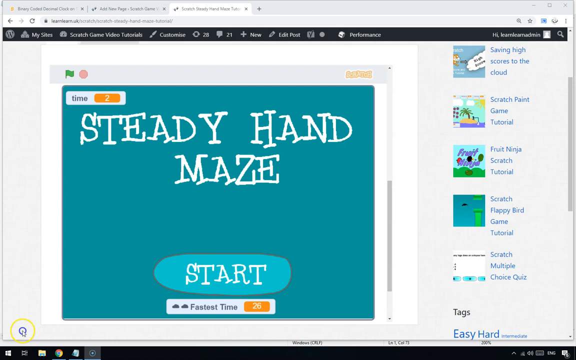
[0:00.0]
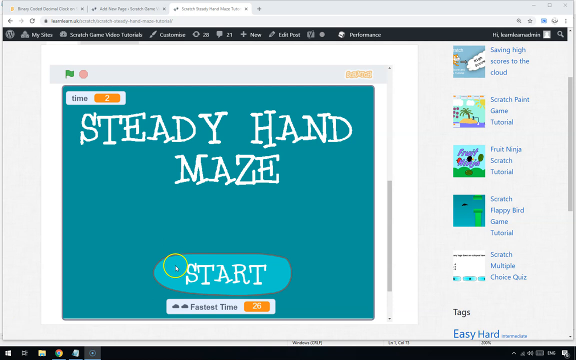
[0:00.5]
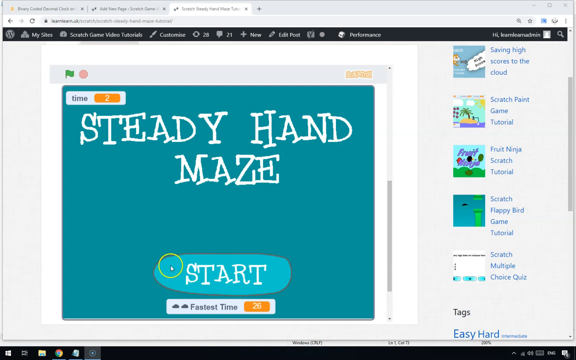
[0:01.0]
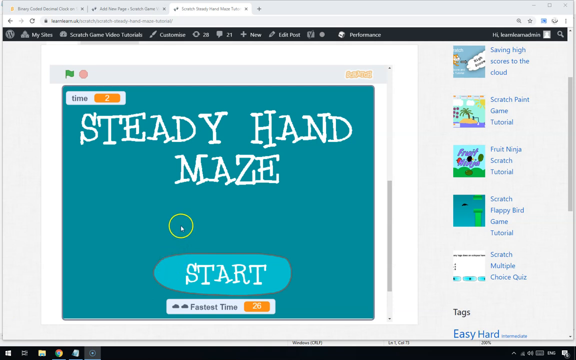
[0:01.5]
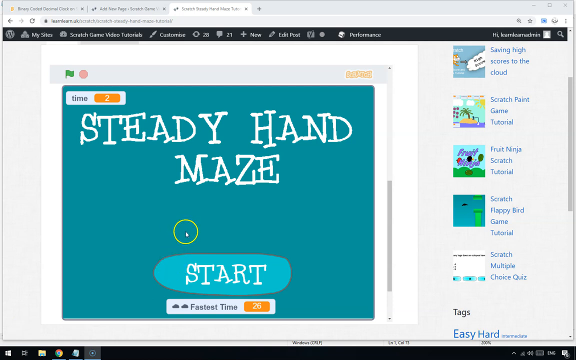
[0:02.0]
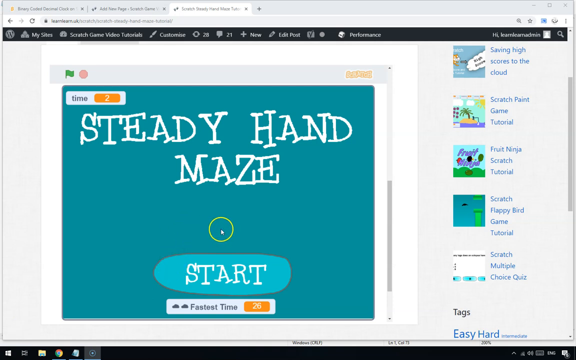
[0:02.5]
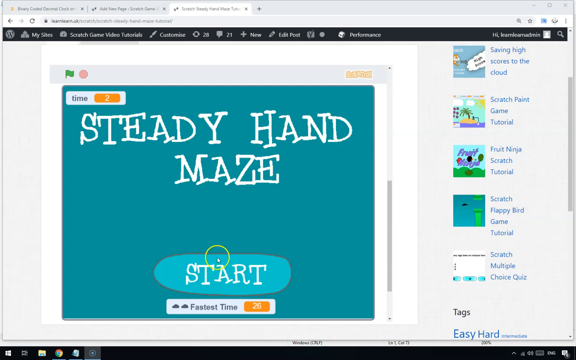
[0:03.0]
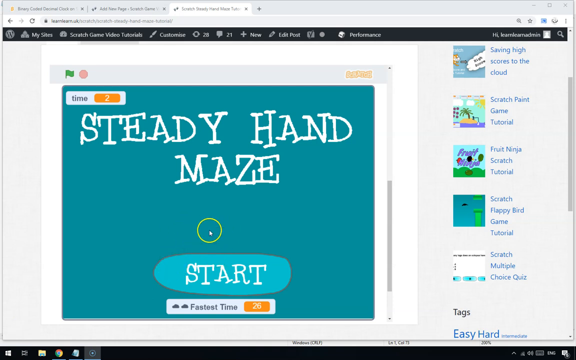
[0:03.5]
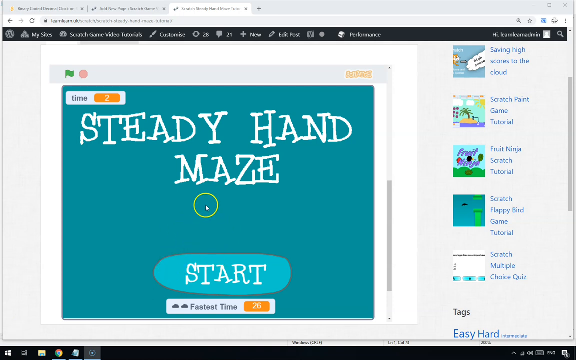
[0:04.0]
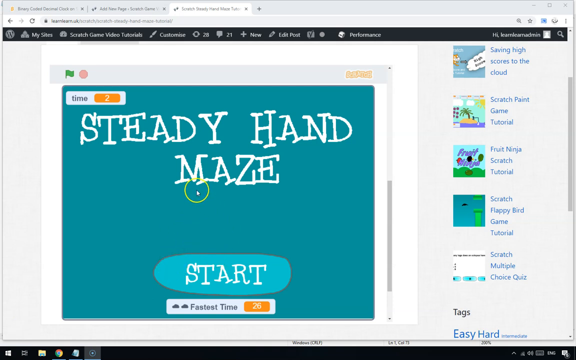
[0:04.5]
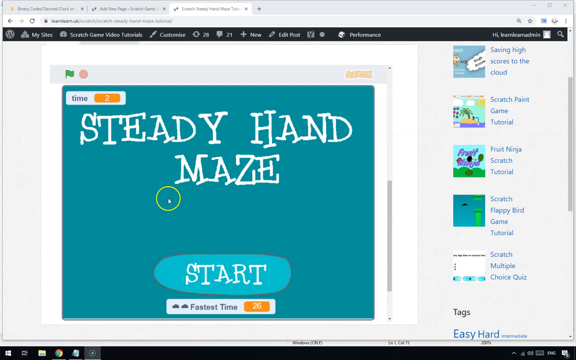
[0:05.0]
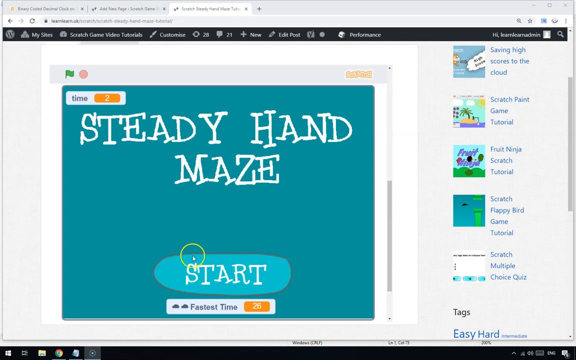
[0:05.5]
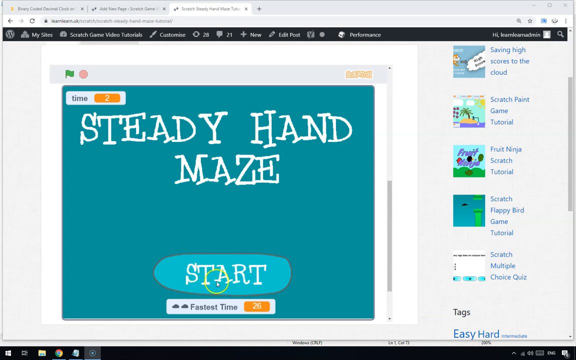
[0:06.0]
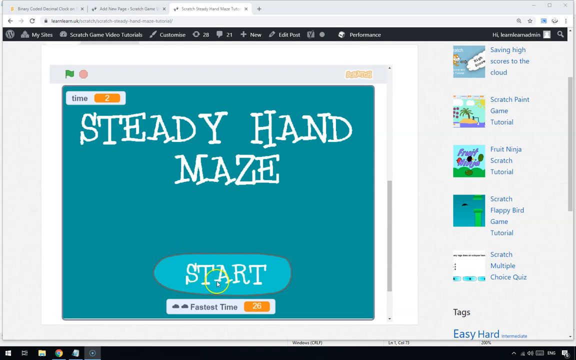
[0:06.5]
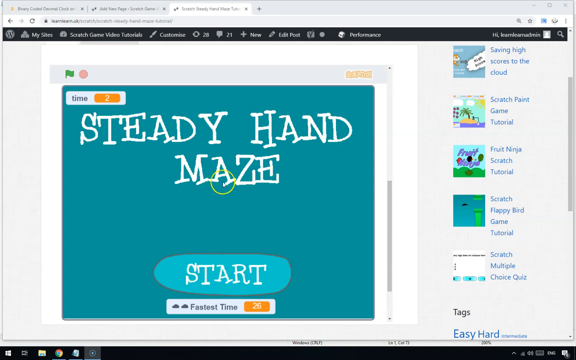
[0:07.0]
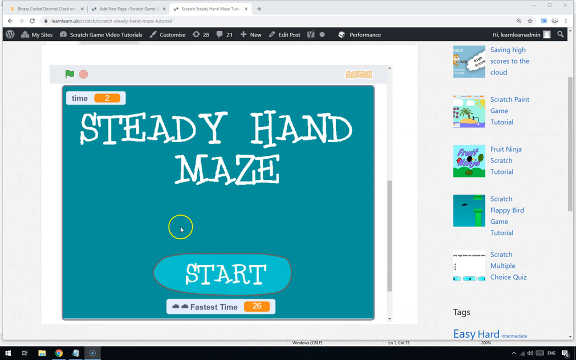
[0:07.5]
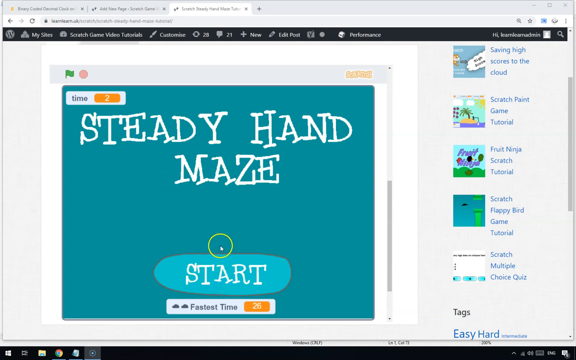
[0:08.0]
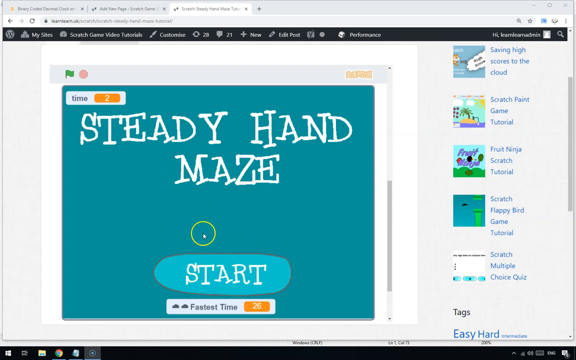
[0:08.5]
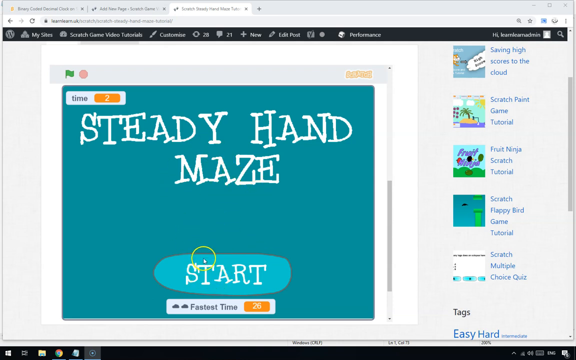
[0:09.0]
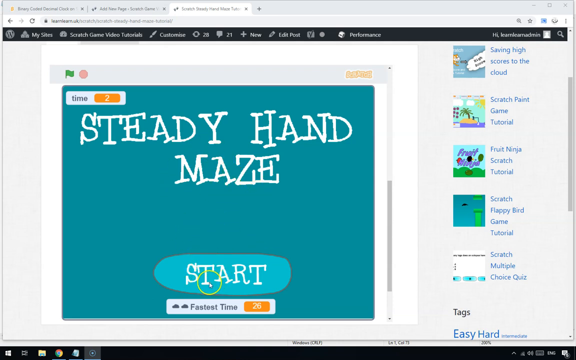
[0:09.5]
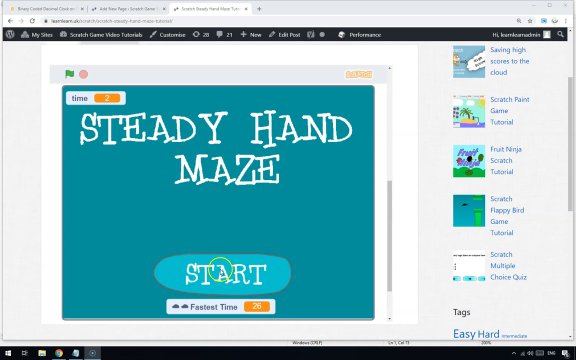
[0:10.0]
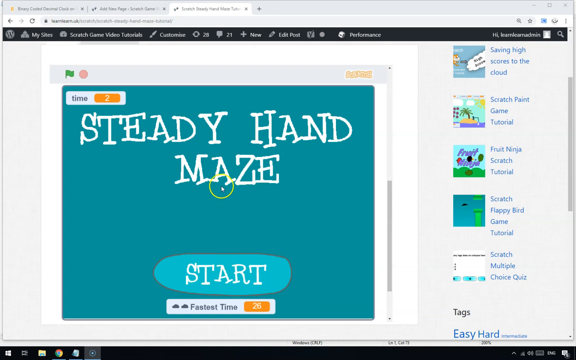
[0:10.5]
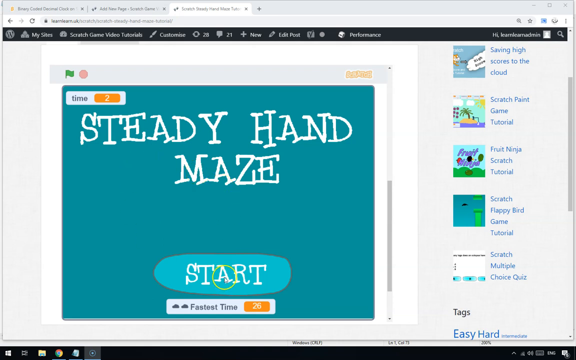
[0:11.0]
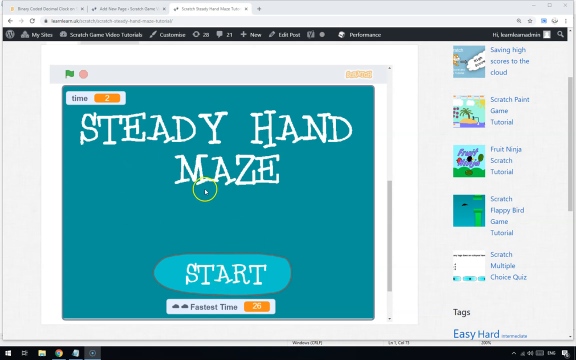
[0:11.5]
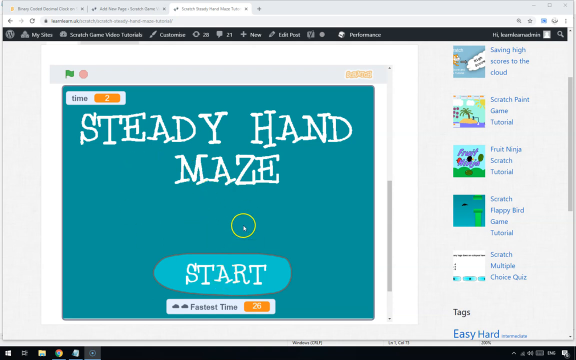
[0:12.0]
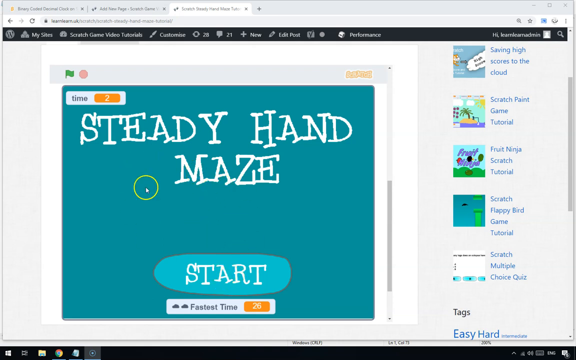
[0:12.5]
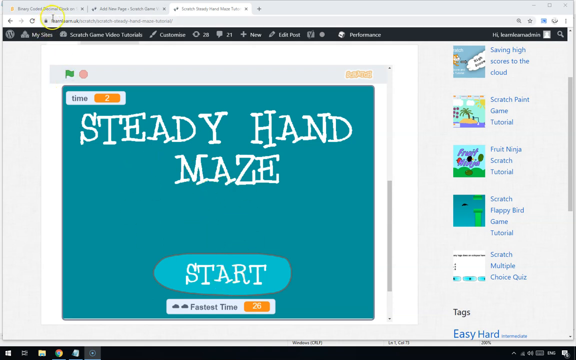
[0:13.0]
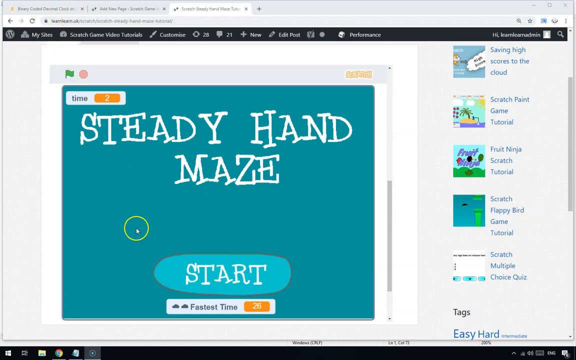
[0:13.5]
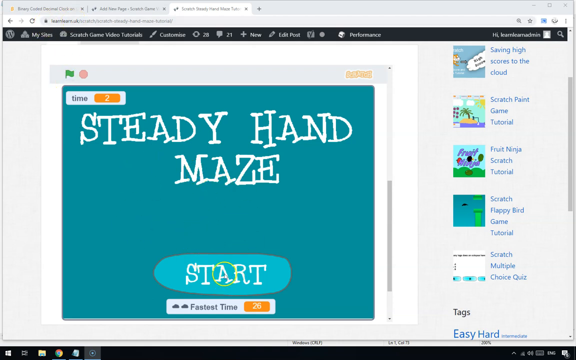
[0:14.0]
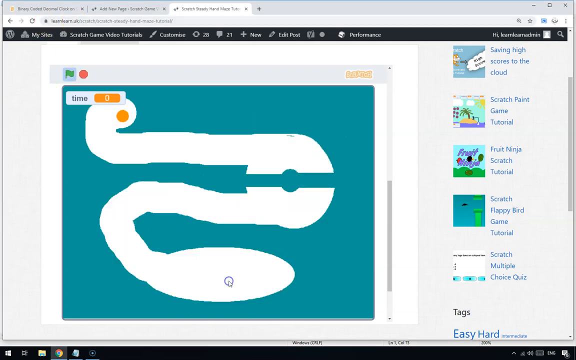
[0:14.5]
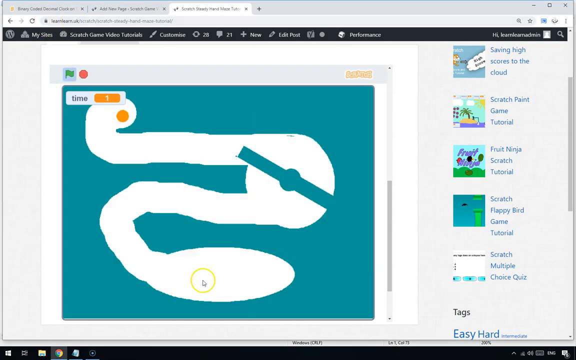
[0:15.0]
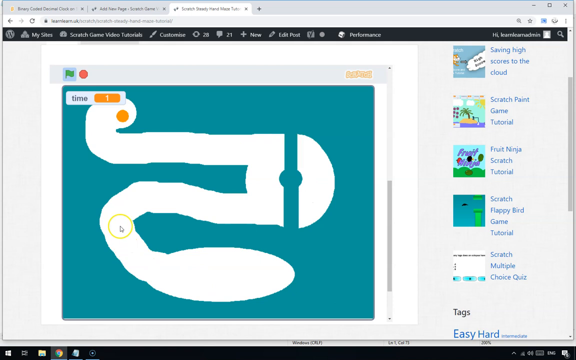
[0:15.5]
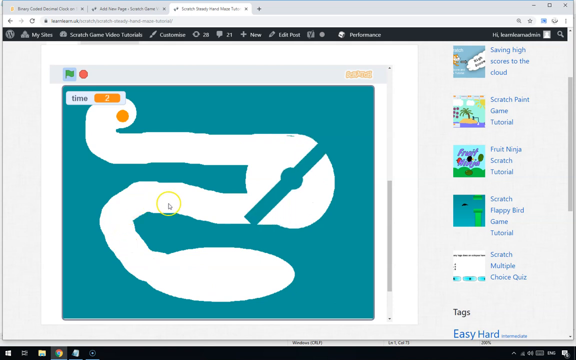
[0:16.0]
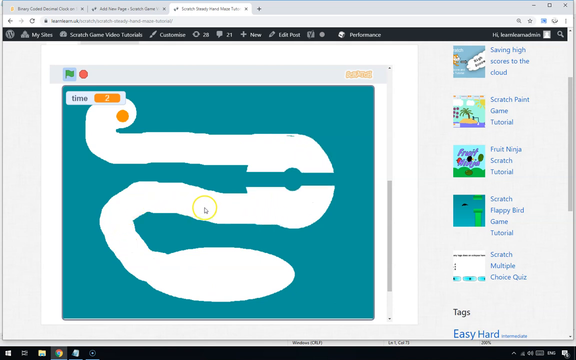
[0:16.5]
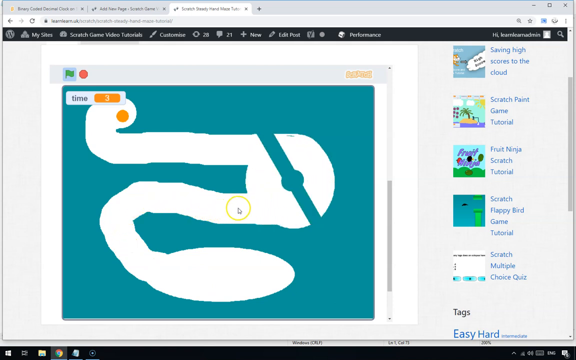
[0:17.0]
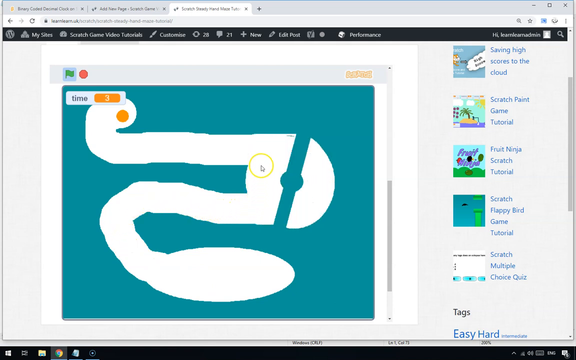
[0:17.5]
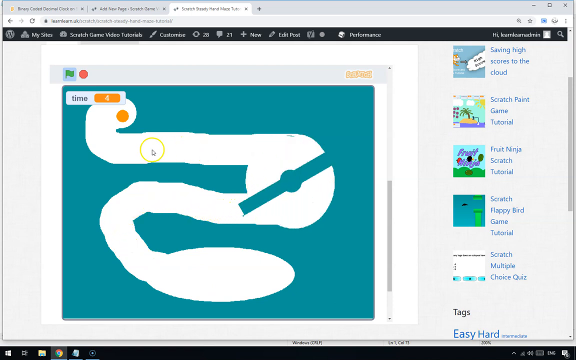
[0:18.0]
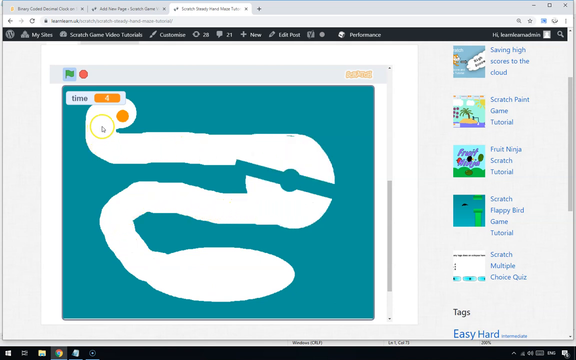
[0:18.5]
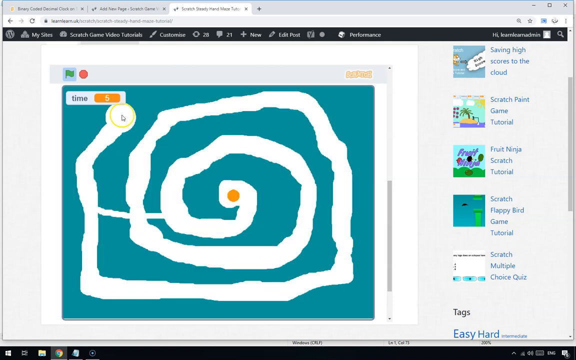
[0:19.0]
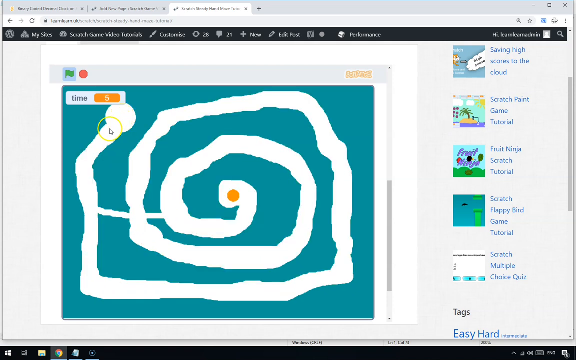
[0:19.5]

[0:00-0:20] A presentation for Steady Hand Maze appears on a screen in a Times Roman type of font, very cartoon-like. There is a Start button that is all handwritten, and the cursor has a yellow line around it. A tab on the right side shows different tutorials with colorful, cartoon-like thumbnails. The cursor hovers over Start, moves up to the title, back down, up, back down again, and goes in circles. The screen then switches to what looks like a maze. There is a green flag, a red dot, and a time showing the number 1. An orange dot is at the top of a little corner; the path curves around to another corner that is split in half, and the rest curves around into a big oval opening. A green propeller moves around there, blending with the background. The cursor is dragged all the way around to show how to get past it in reverse. Another, even longer maze then appears.